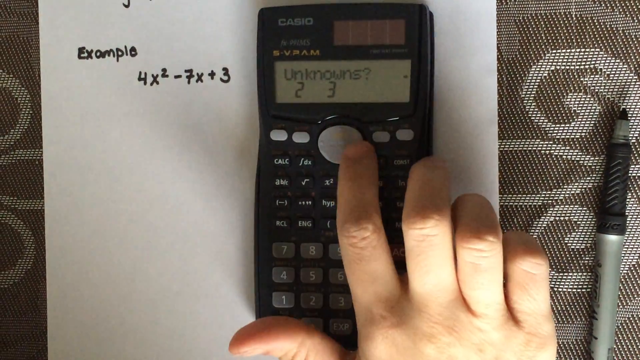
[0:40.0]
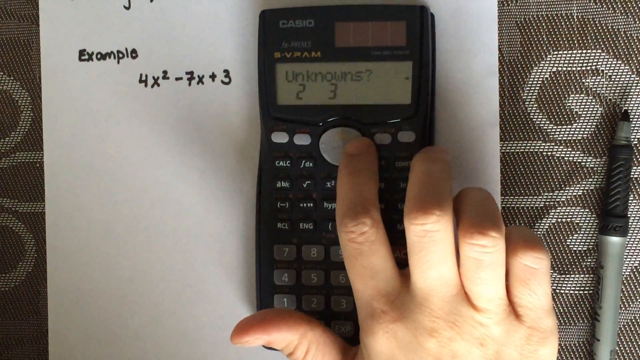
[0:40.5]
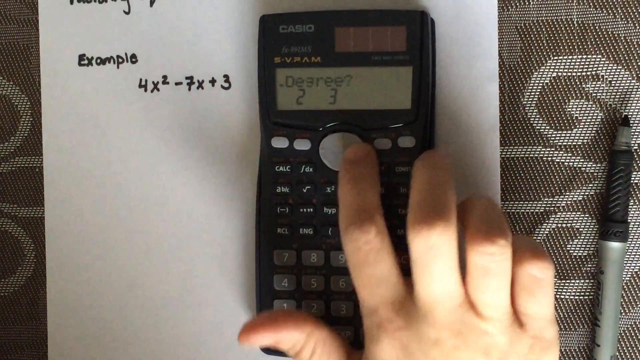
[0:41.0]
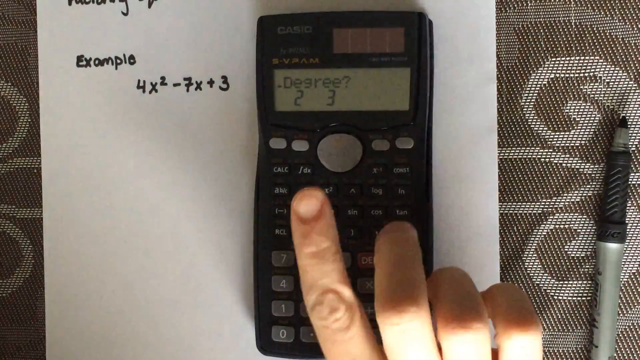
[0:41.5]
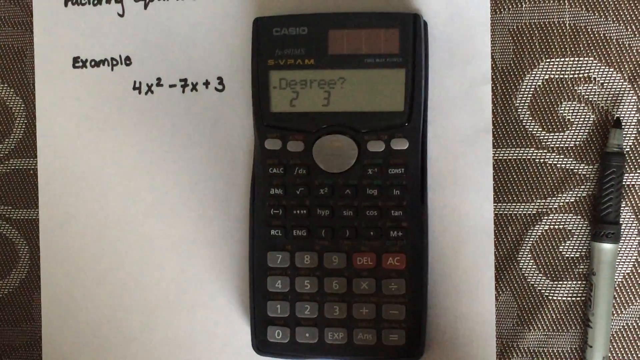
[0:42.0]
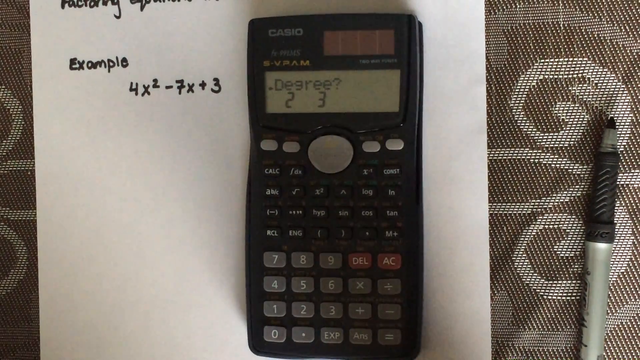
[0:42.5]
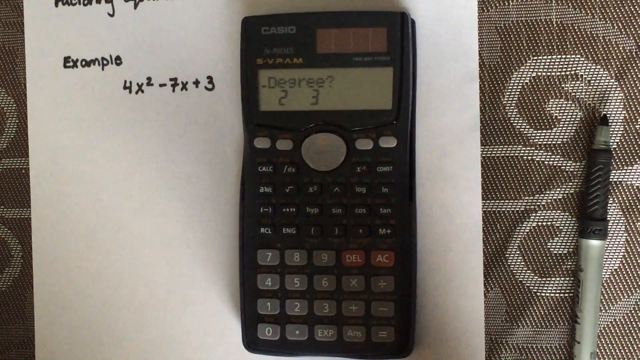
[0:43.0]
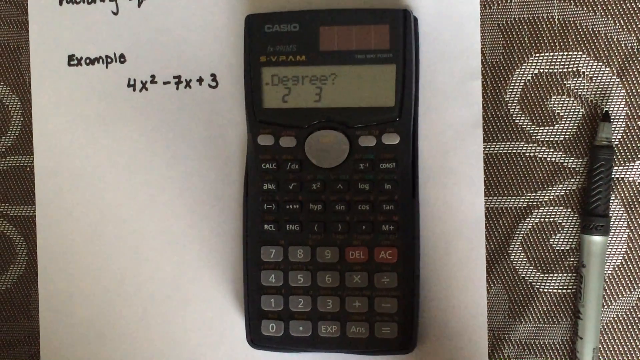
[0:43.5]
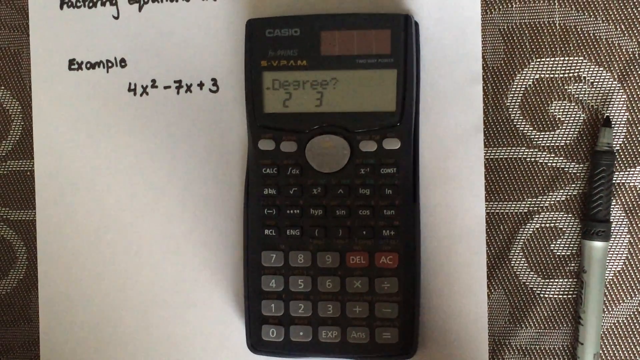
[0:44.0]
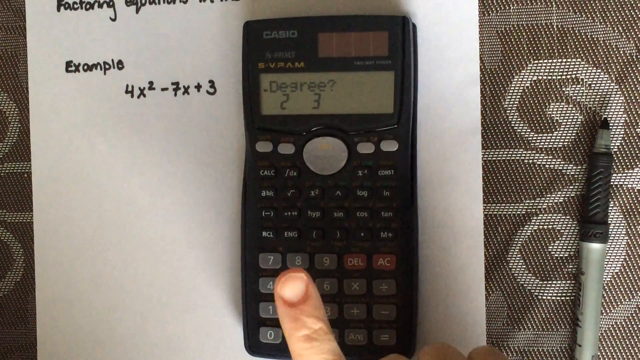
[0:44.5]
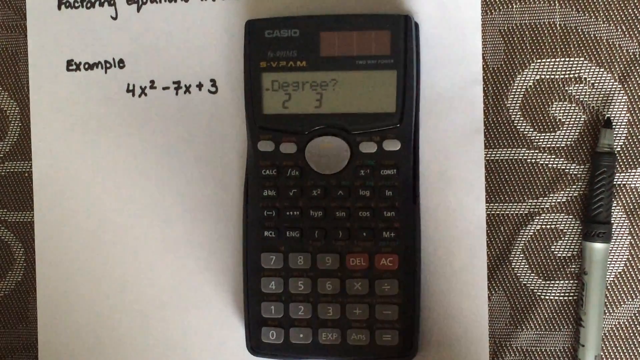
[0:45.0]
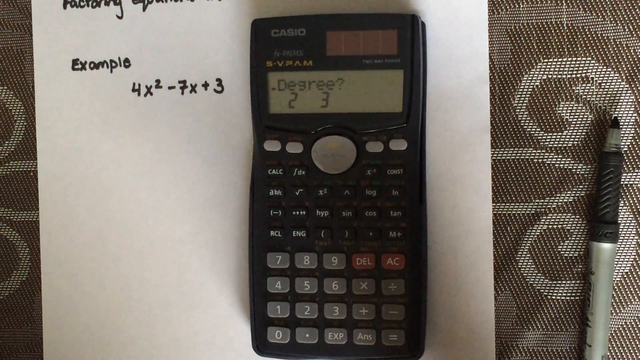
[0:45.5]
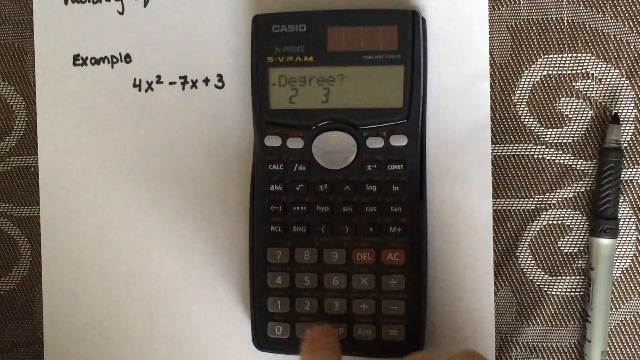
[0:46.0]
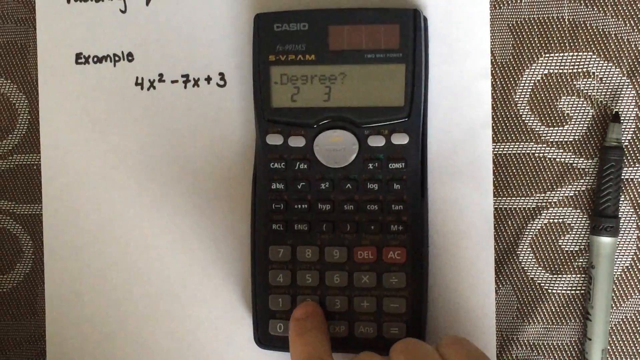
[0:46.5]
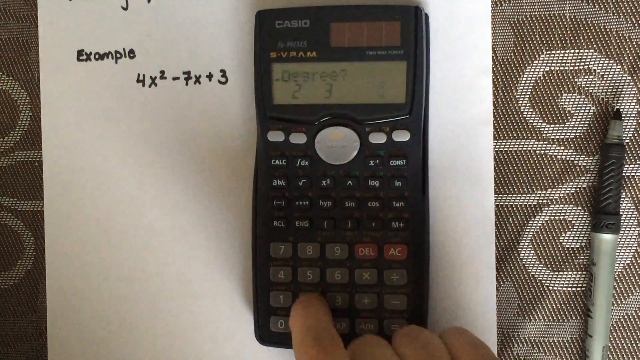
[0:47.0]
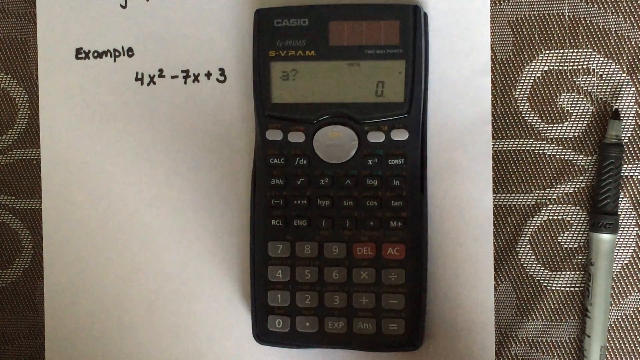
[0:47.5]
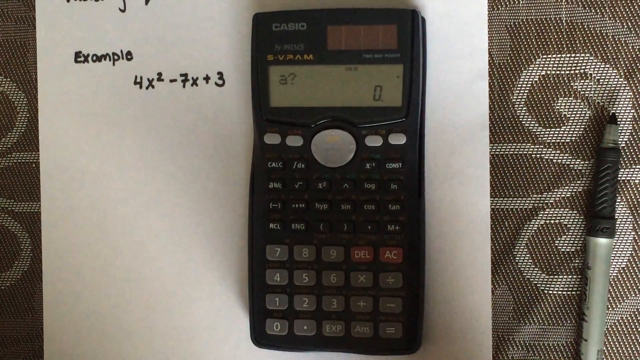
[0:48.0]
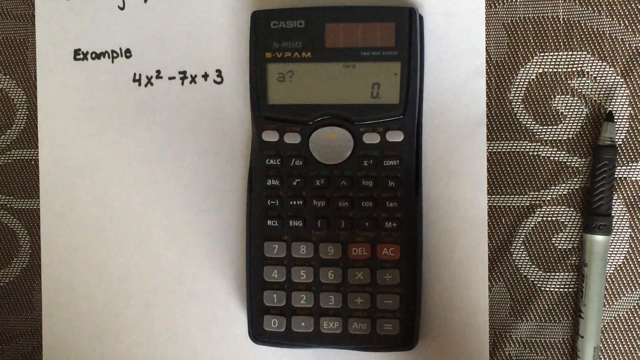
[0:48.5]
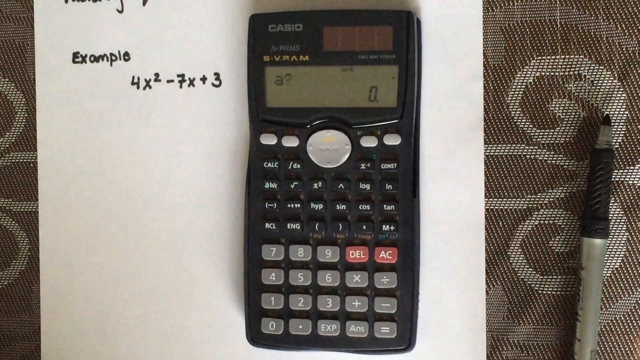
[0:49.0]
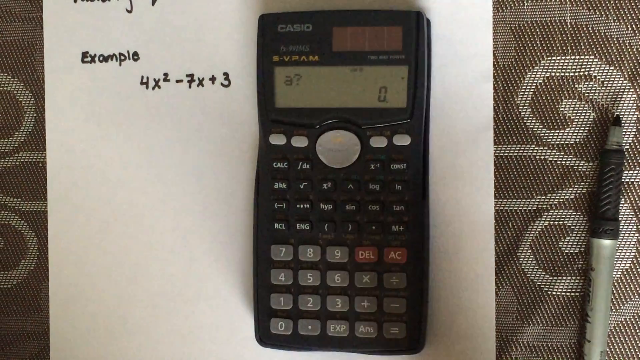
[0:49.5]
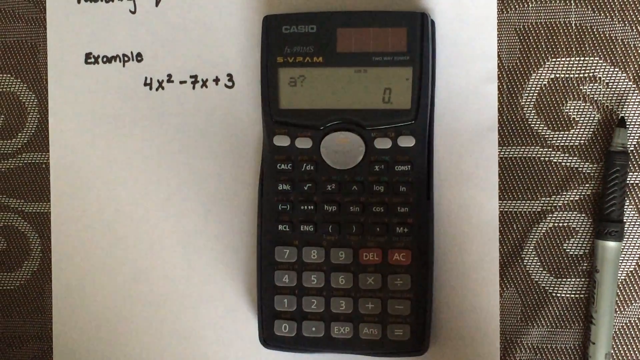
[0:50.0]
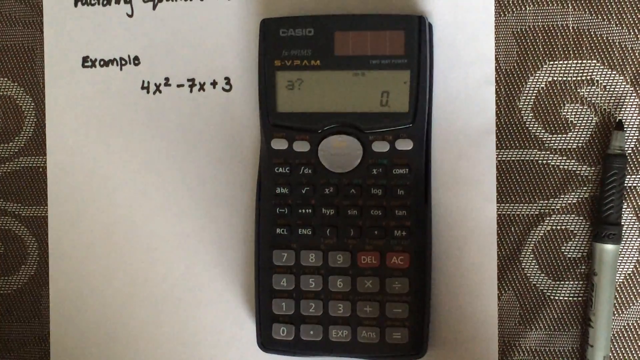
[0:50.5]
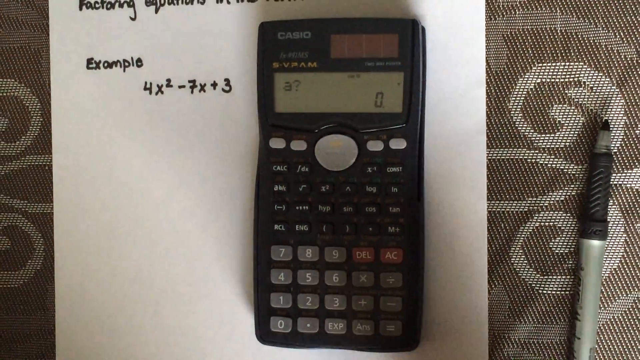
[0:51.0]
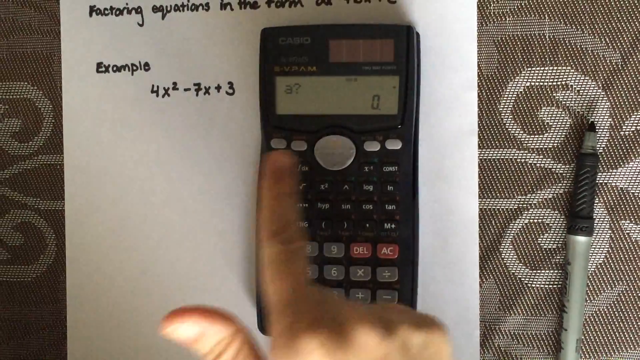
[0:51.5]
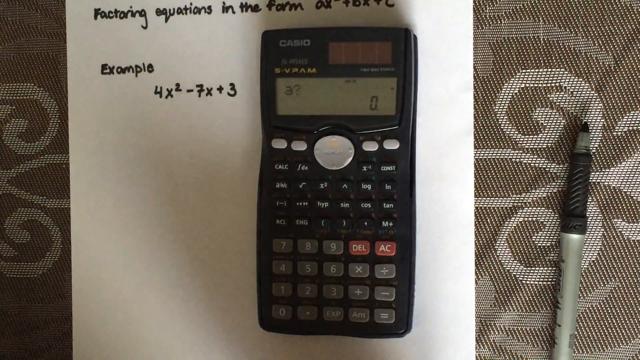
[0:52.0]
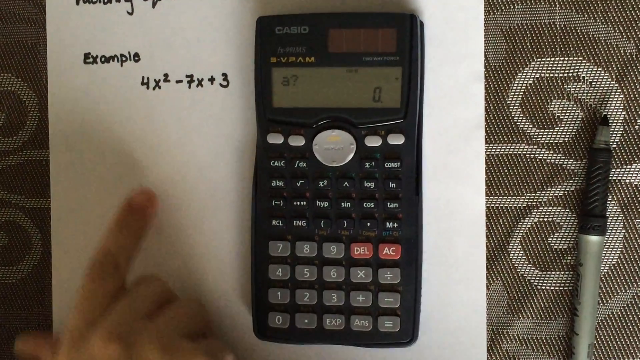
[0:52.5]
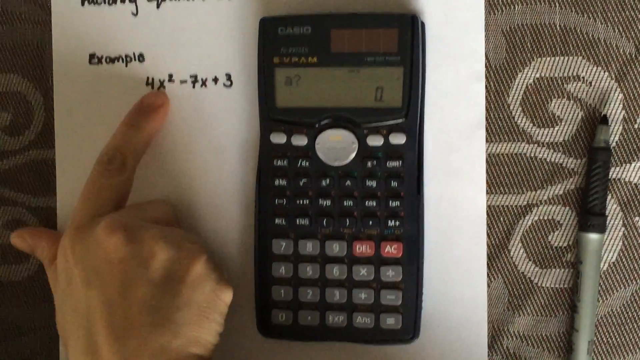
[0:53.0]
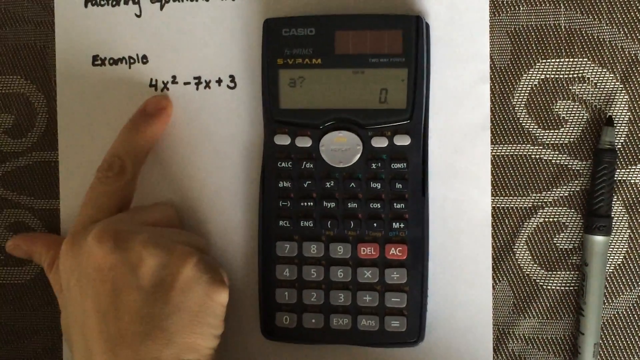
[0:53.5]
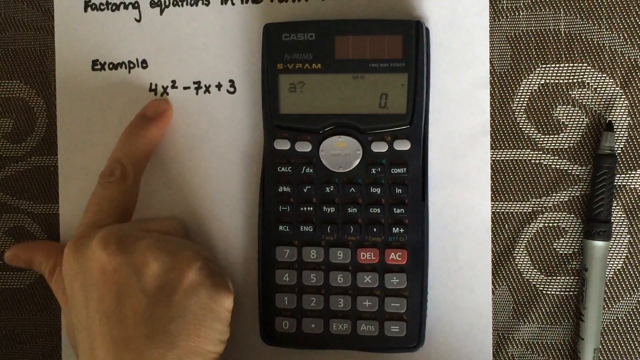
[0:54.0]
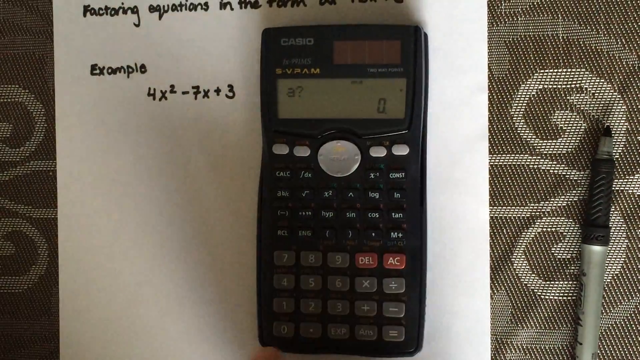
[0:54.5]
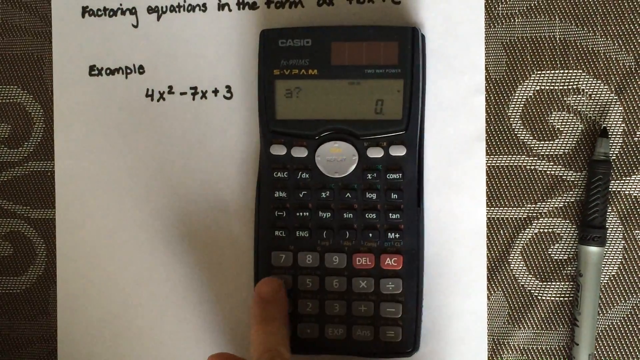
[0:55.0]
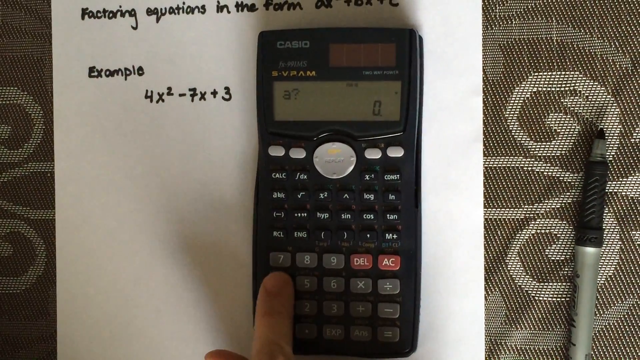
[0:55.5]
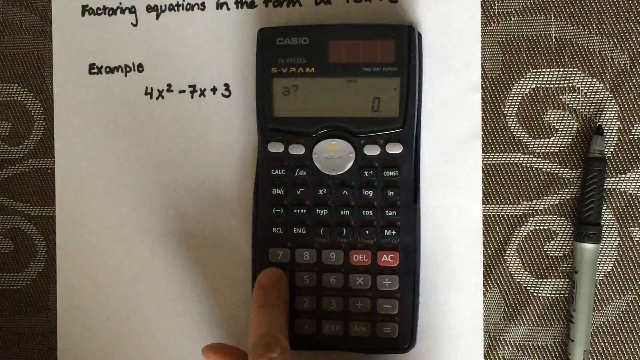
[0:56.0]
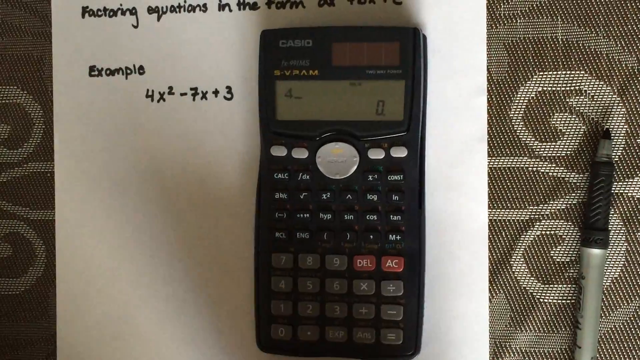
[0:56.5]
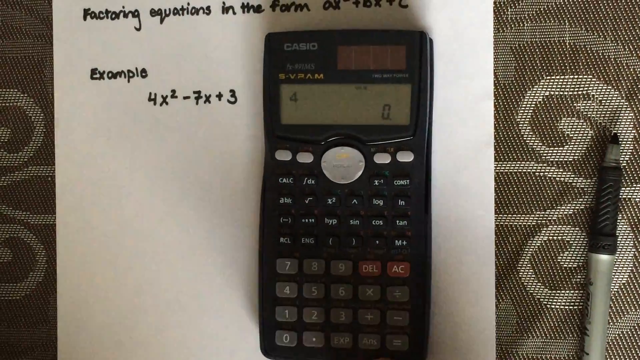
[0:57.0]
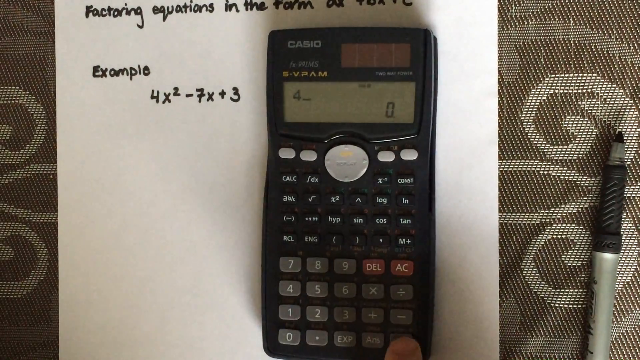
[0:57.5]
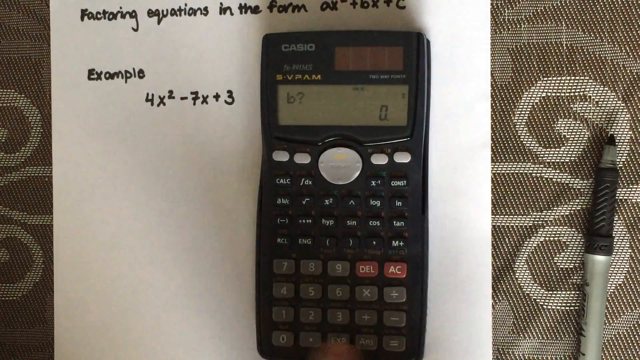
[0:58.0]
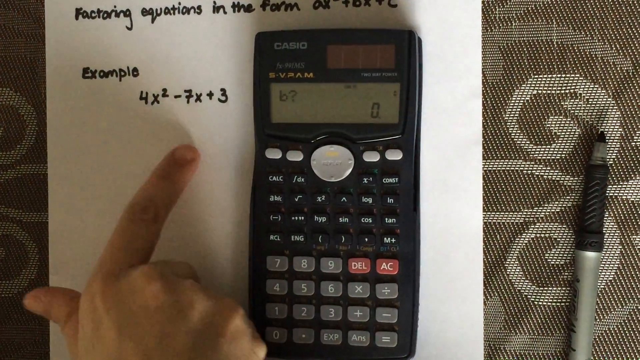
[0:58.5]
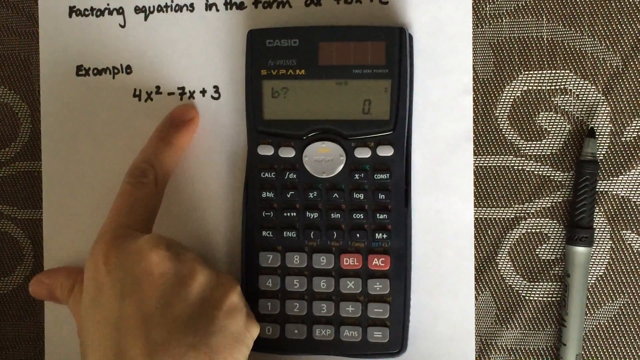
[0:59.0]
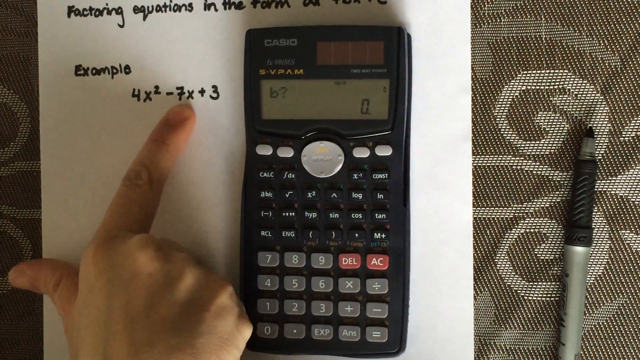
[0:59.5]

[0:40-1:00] The calculator is on a sheet of paper, and a hand appears to be typing on it. At first the calculator display shows only a question mark and 0. The person types 4, and the display changes to "b?"; the person appears to be entering the values for the variables a, b and c. The paper shows the example 4x squared minus 7x plus 3. Behind the paper is a sofa-like area with a design, and an uncapped pen is on the right-hand portion of the sofa.